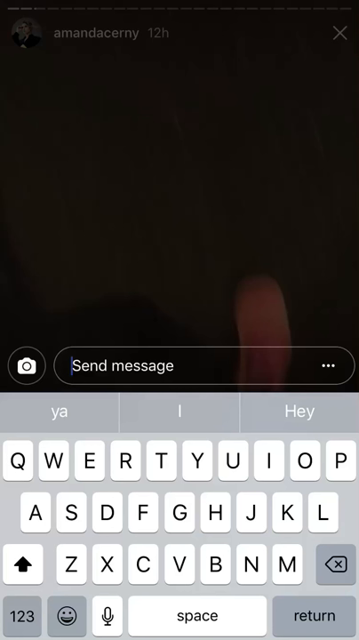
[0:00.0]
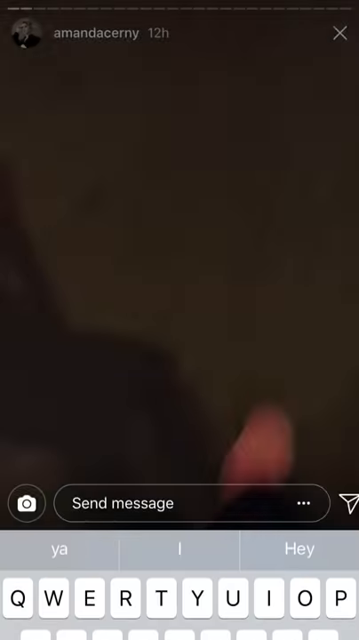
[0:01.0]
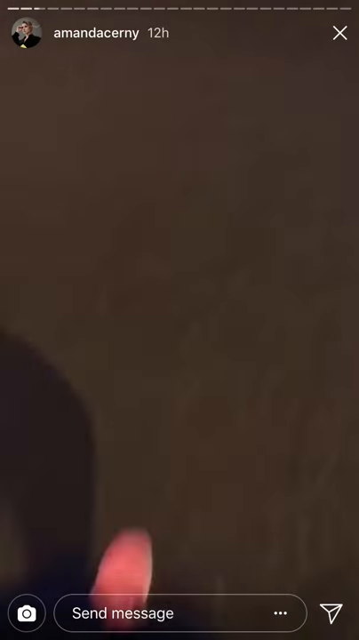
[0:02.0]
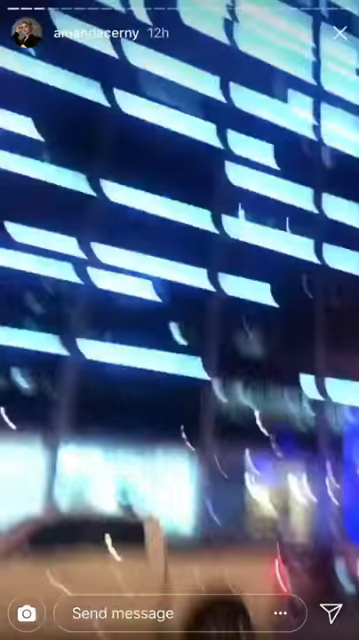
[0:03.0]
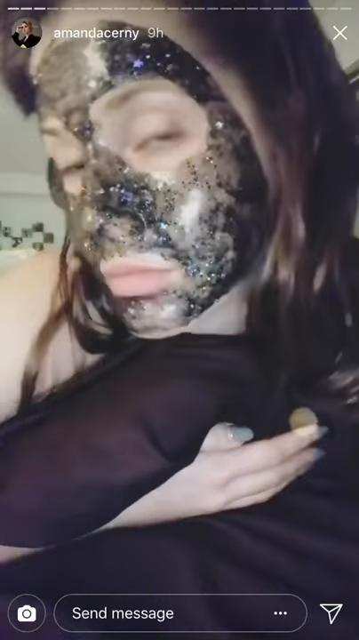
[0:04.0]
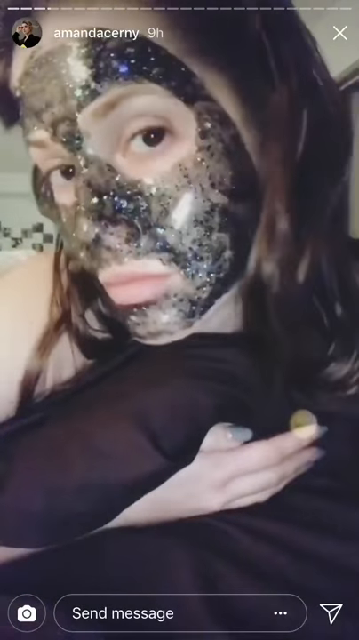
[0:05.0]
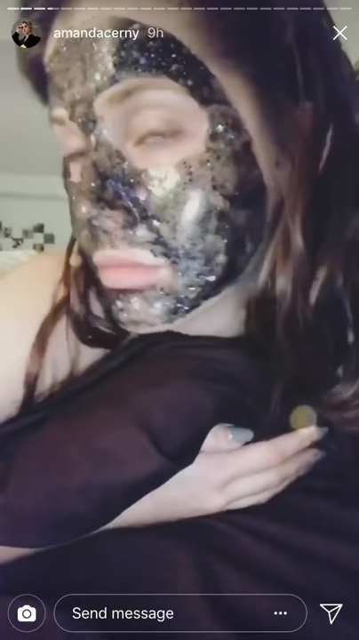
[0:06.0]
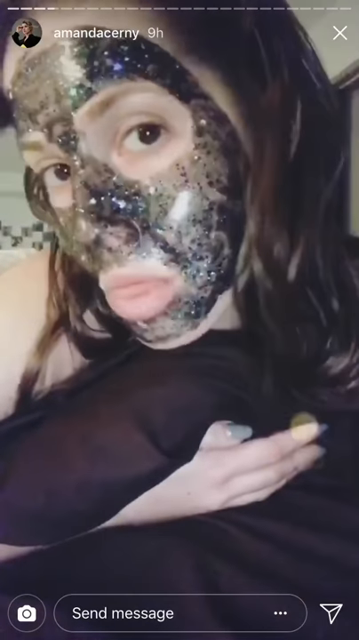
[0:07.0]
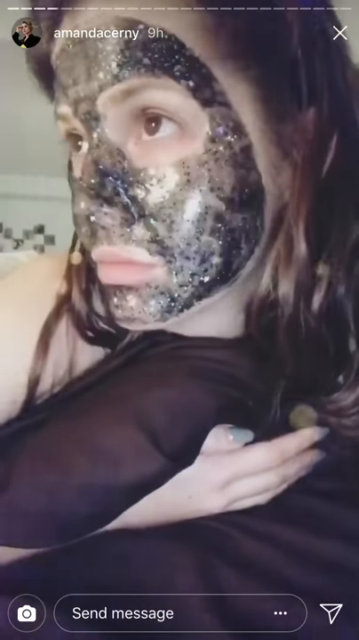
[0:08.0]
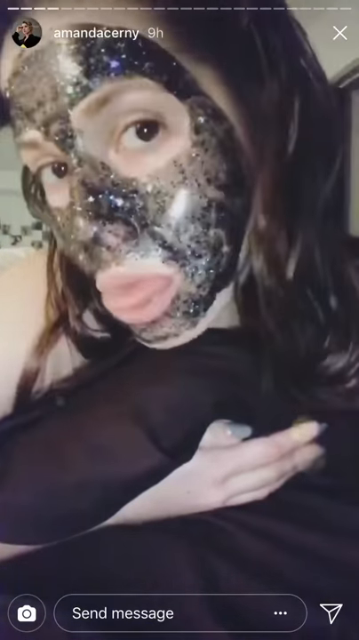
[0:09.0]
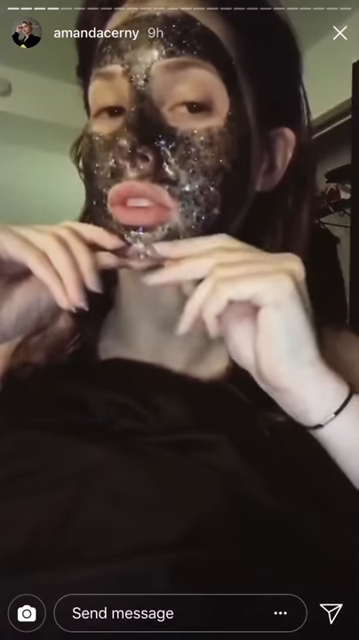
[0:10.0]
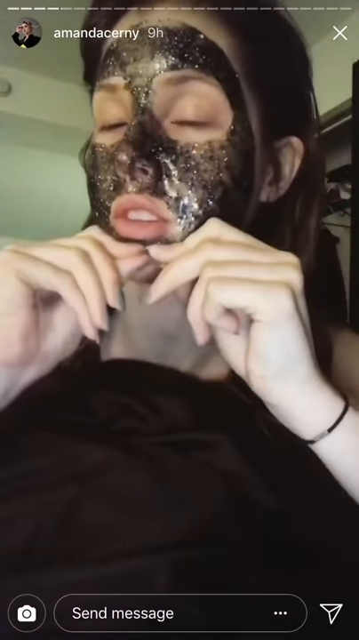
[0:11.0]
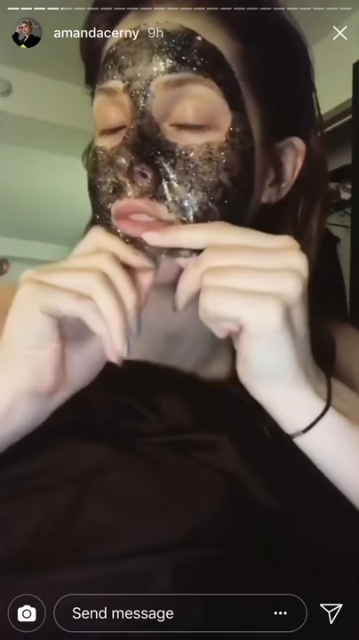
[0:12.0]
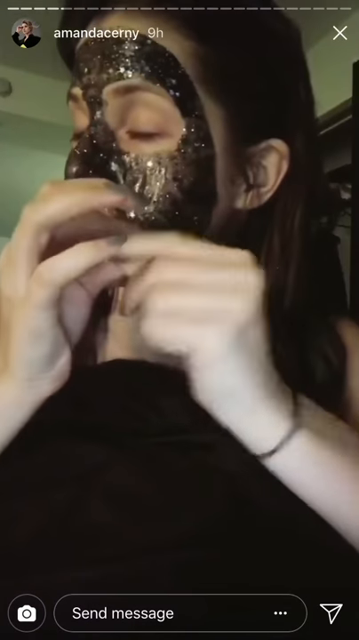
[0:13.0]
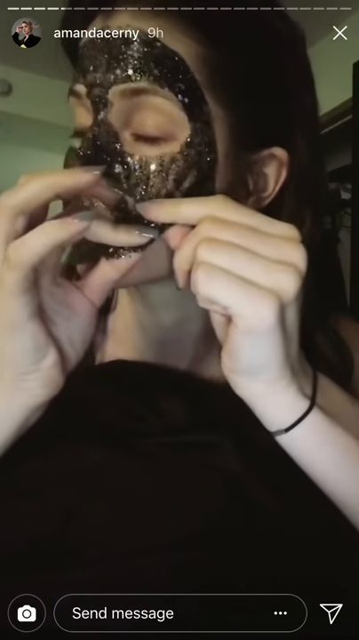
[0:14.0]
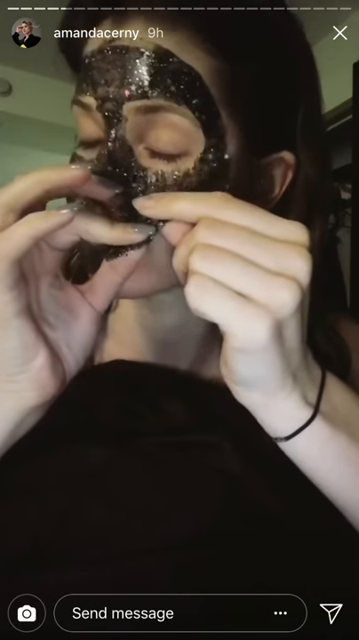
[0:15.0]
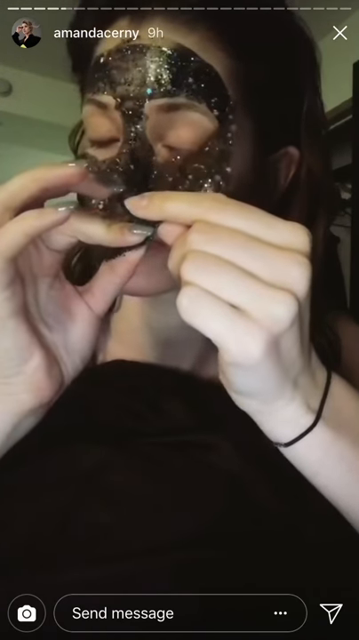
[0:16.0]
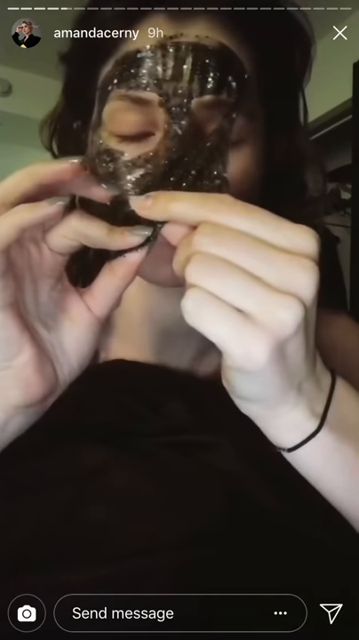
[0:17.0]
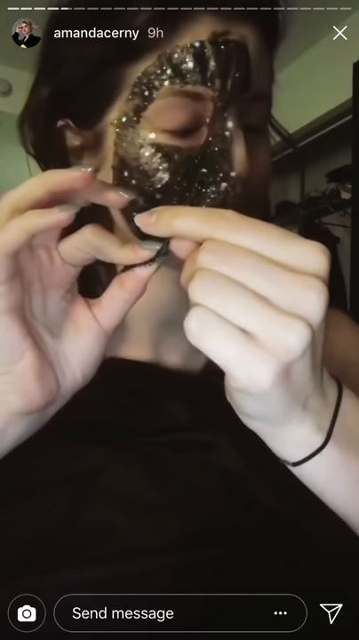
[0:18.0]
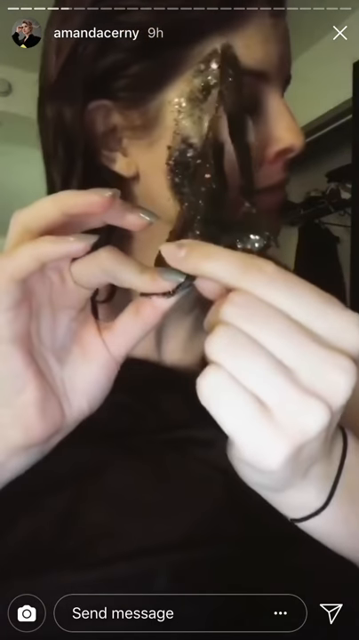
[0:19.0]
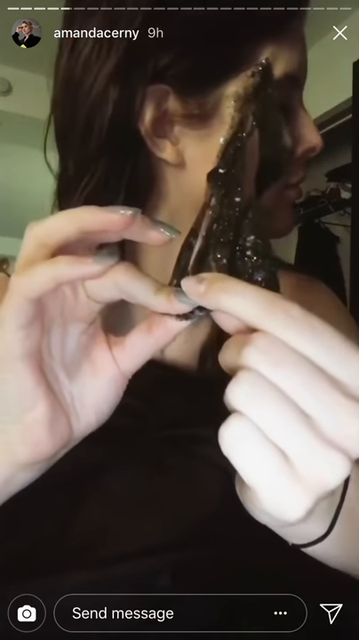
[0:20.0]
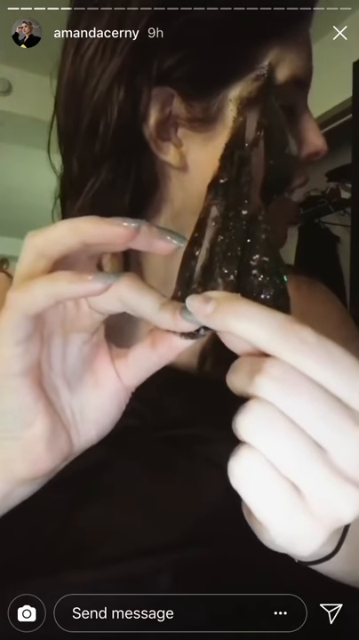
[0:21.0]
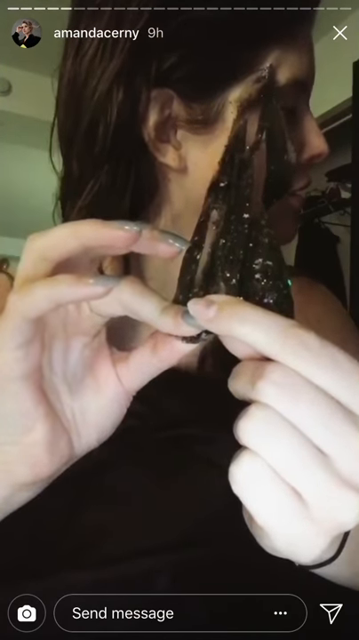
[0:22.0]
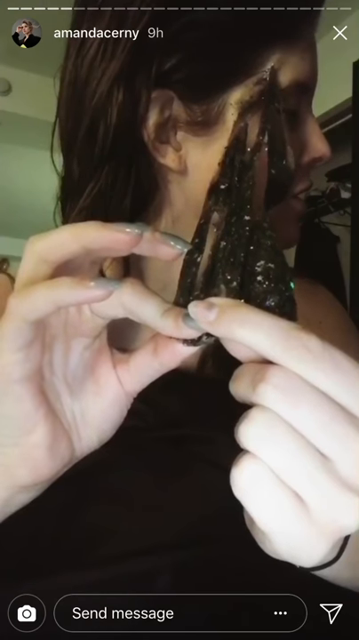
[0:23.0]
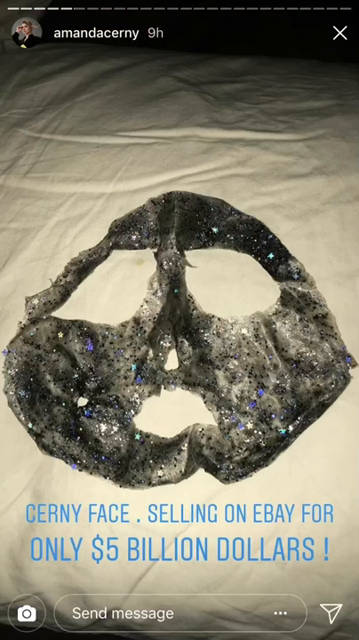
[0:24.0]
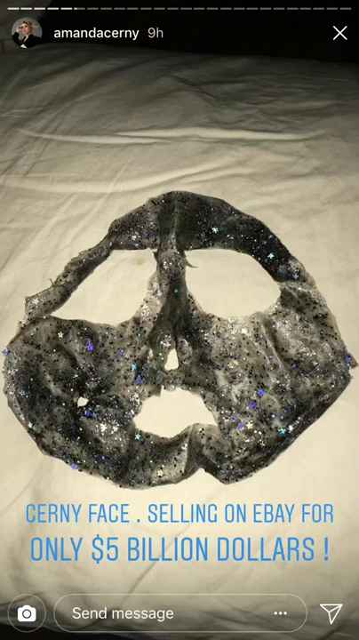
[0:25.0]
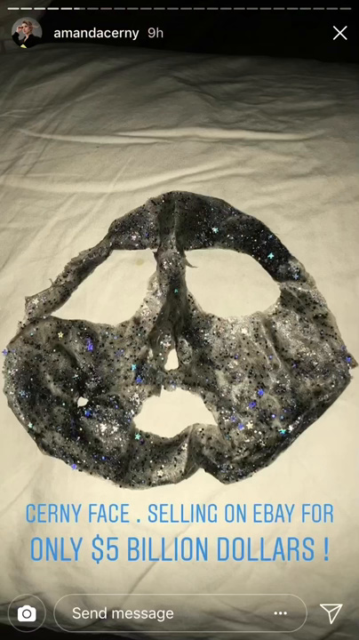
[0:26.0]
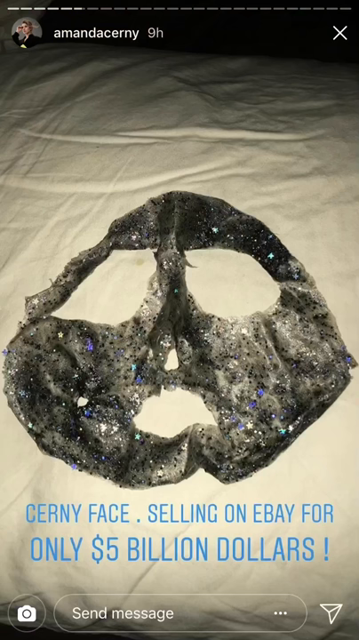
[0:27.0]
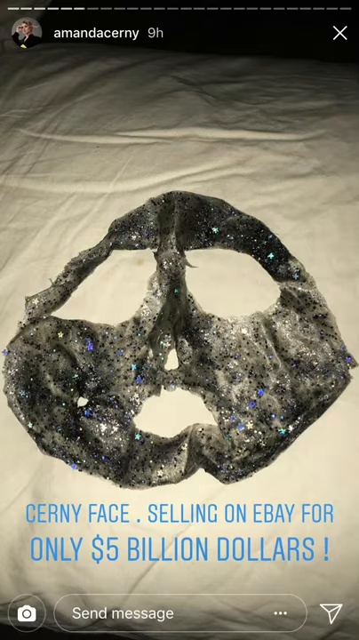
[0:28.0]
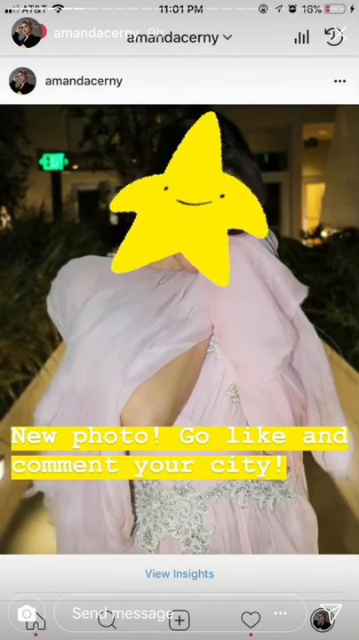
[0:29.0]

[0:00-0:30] The video opens on an Instagram story from the user amandacerny, with the keyboard displayed at the bottom of the page. It then changes to footage of someone running while holding their camera and showing their feet; they wear blue jeans and bright pink shoes. Next comes the face of a woman wearing a black mask with some diamond particles. She peels the mask off with both hands, starting from the chin, then turns her head so the camera sees her from the side. She places the peeled-off mask on top of her bed, and below it is blue text reading "Cerny face selling on eBay for only $5 billion dollars". The video then shows a woman in a purple dress with a yellow star-shaped emoji and yellow text reading "New photo go like and comment your city!"